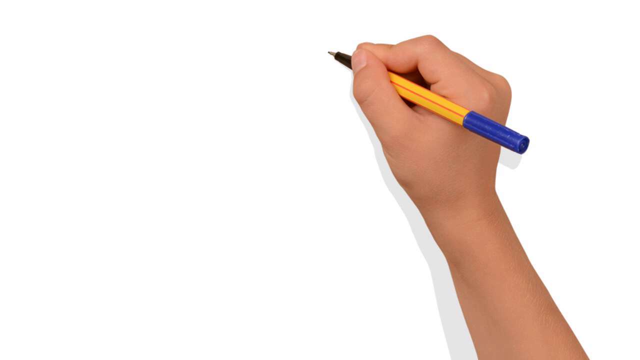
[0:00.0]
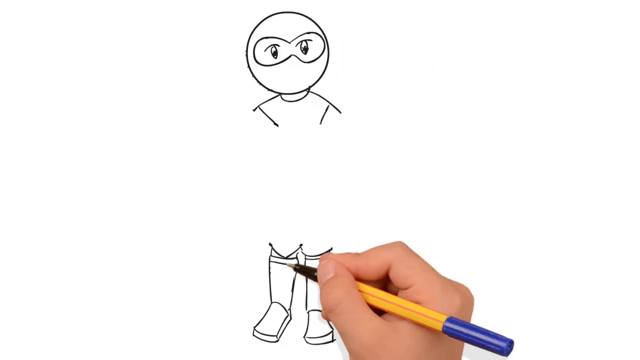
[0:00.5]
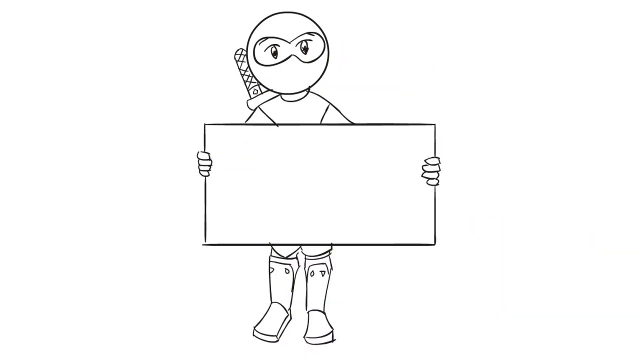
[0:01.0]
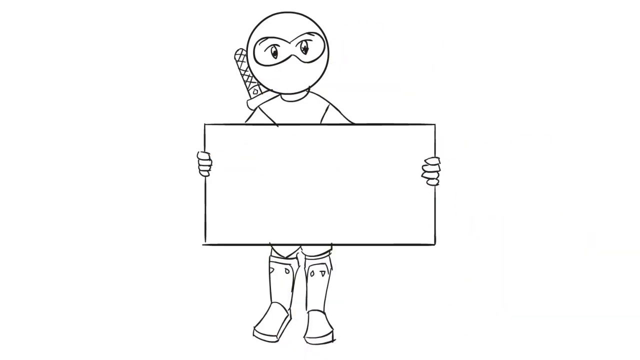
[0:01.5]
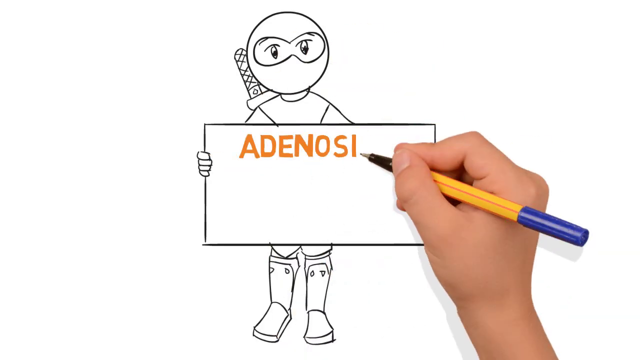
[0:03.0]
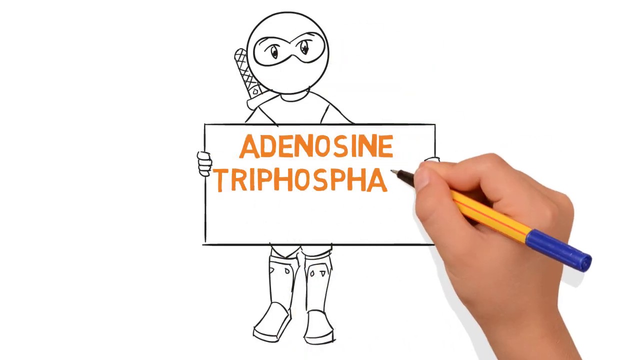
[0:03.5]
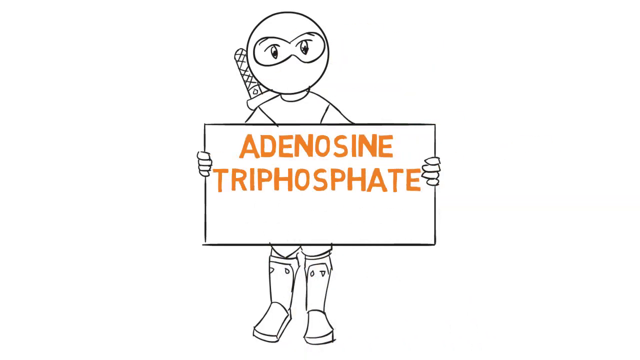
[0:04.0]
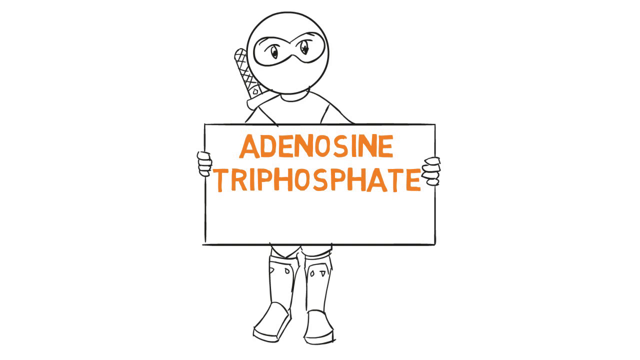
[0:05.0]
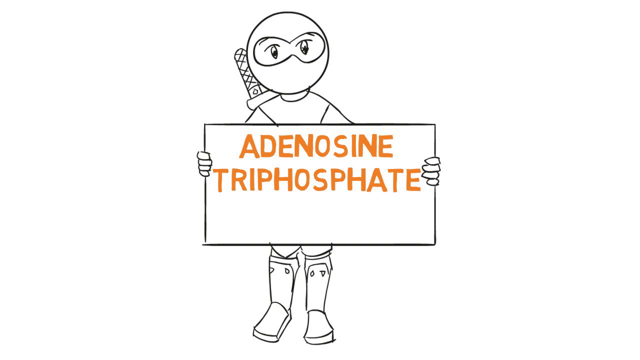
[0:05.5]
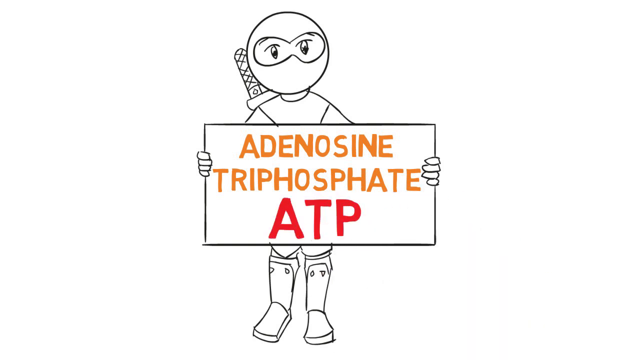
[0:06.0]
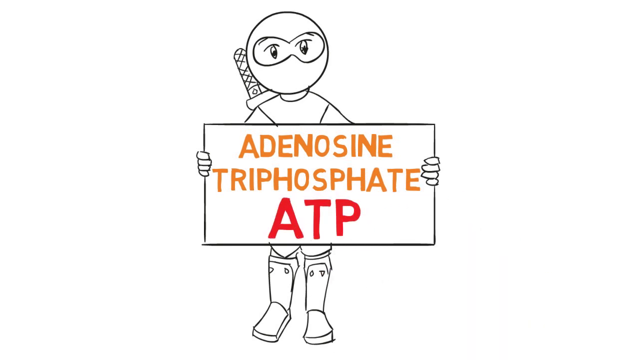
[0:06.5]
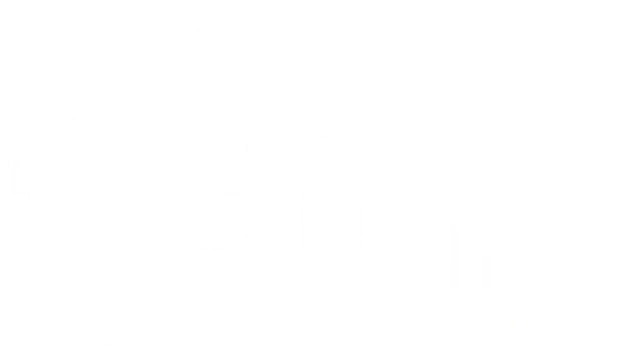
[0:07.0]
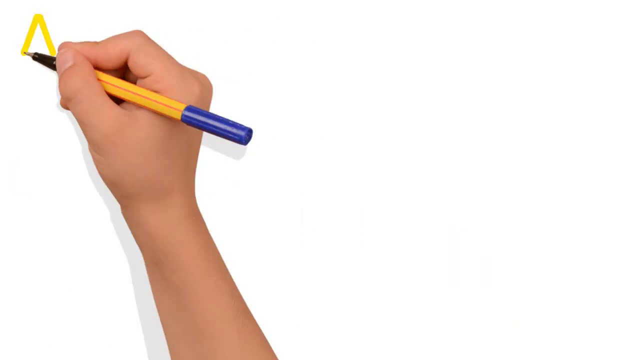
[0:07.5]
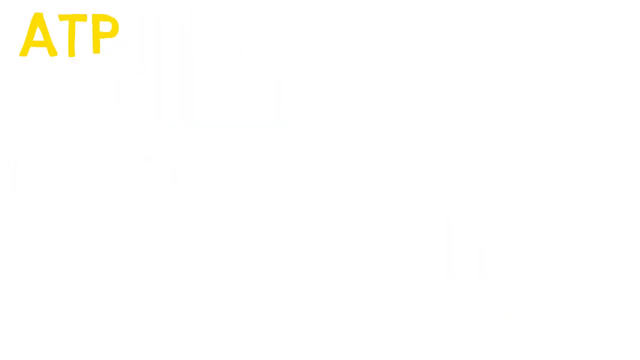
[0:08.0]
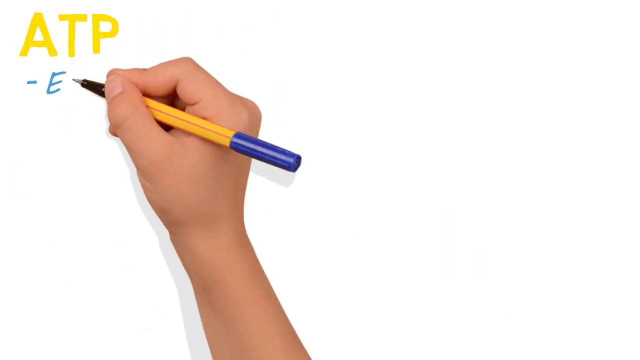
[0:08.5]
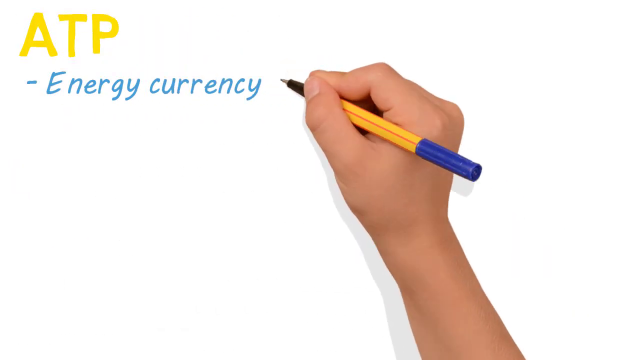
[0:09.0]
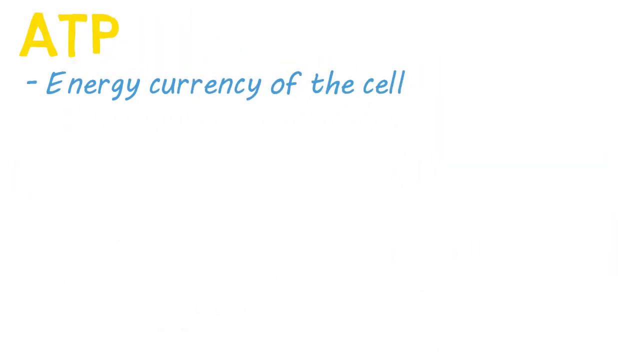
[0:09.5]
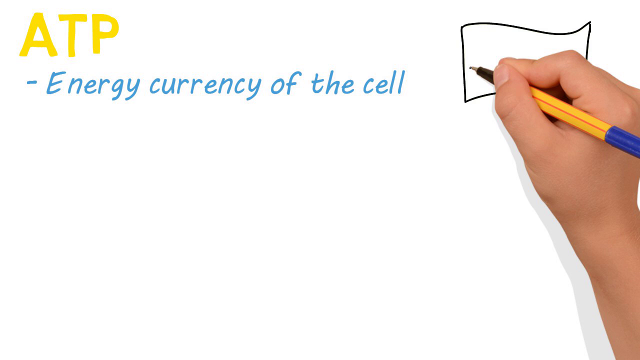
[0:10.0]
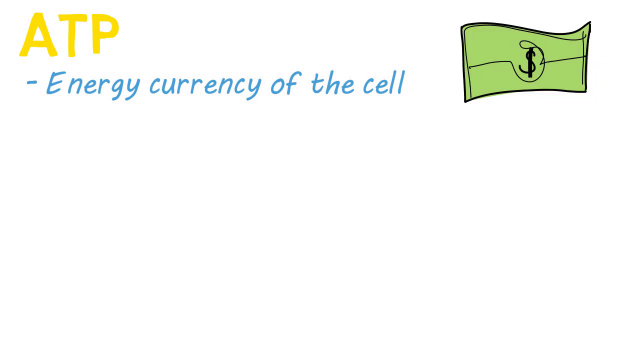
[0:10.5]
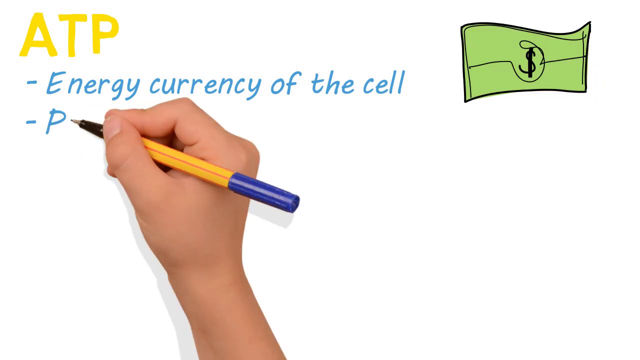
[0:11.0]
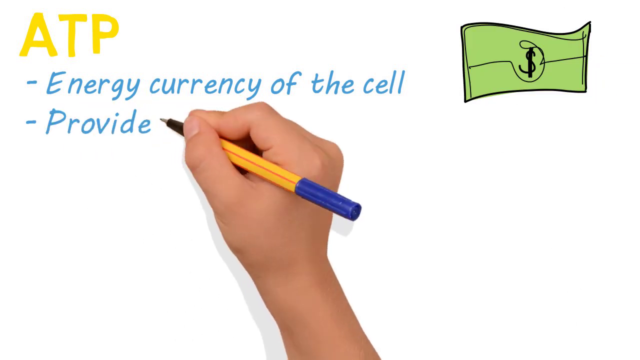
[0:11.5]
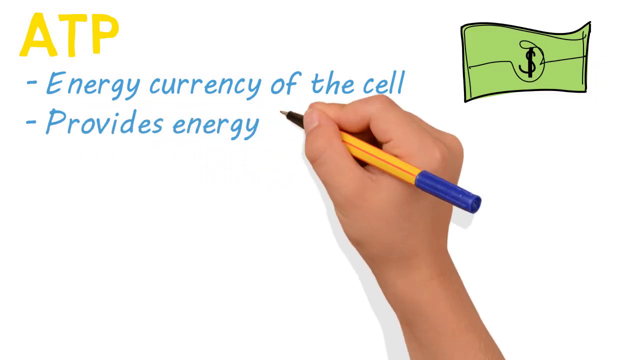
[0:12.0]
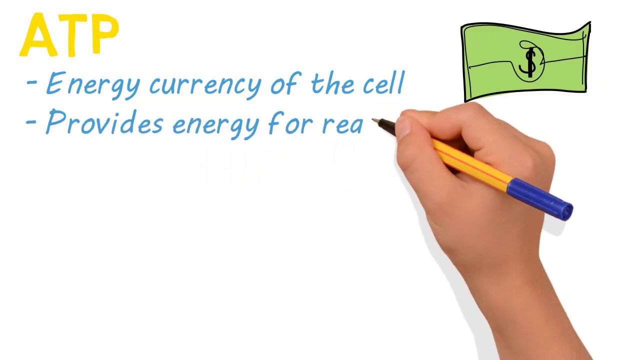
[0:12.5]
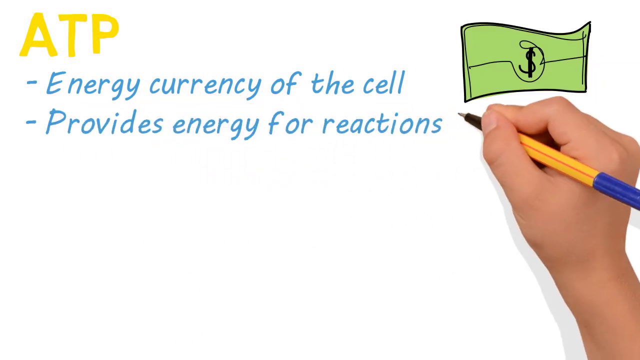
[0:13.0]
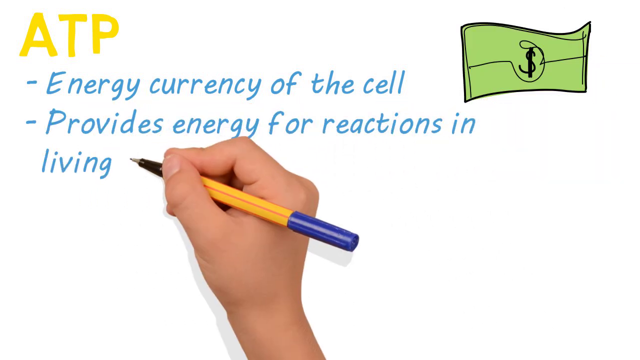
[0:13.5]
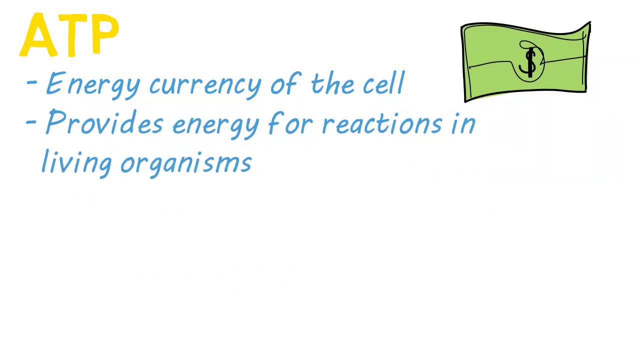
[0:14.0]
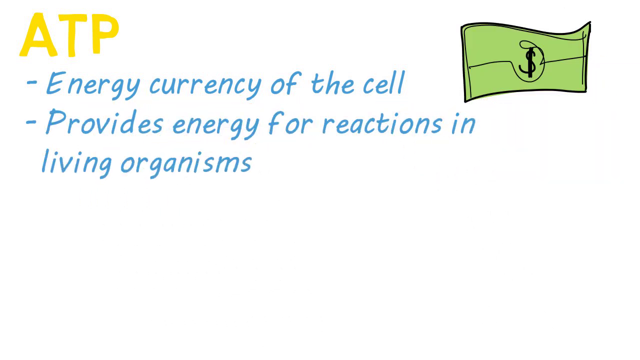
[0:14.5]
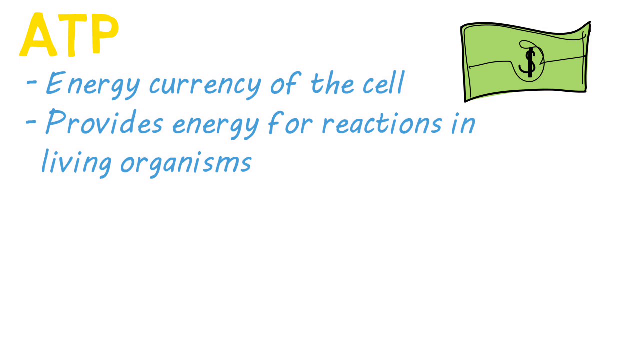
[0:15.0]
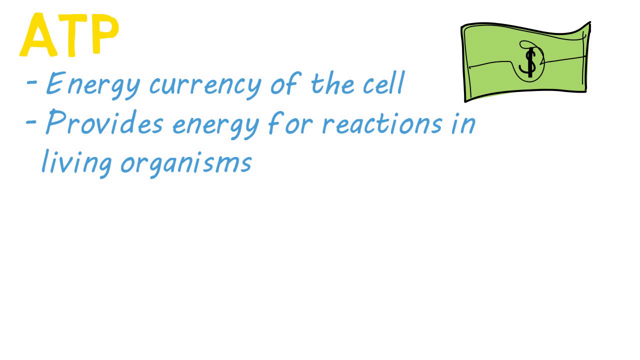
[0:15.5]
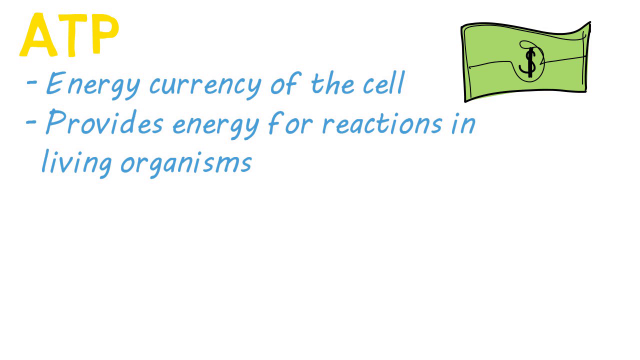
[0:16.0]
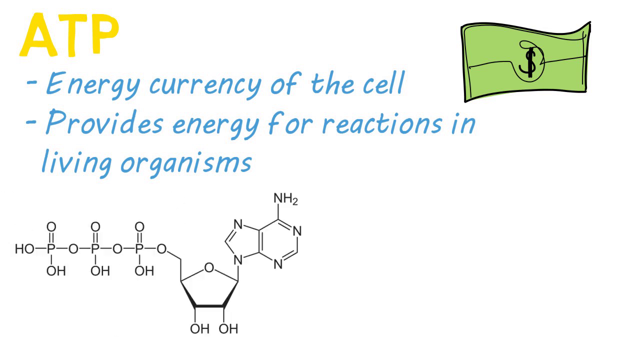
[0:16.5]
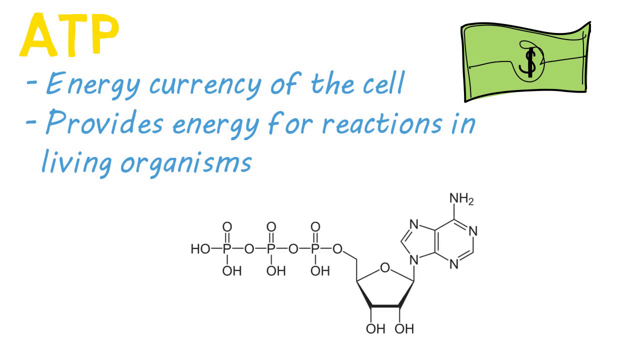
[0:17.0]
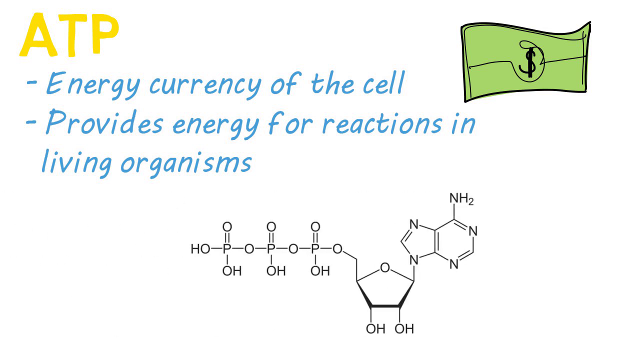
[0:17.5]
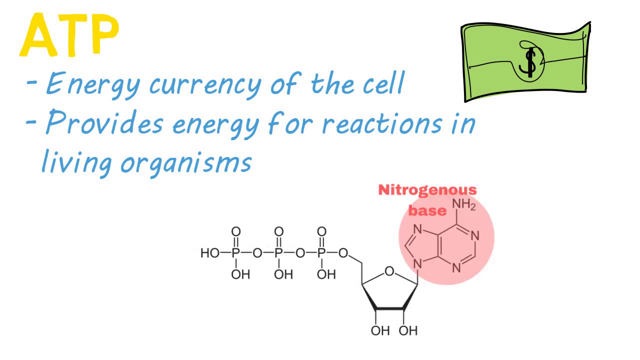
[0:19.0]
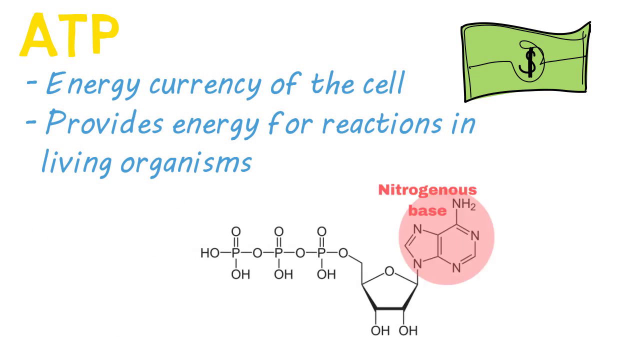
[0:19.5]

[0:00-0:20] A hand holding a pencil appears on screen. The pencil has a blue top, a yellow center, and a black area at the tip. Holding it in the right hand, the hand draws a black-and-white image that looks like a samurai. The same hand then writes words onto the banner the figure is holding: "adenosine triphosphate." Underneath that it writes "ATP," apparently the abbreviation for the term on the banner. The hand then moves across the screen from left to right, writing more words. At the top the text reads "ATP," "energy currency of the cell," and "provides energy for reactions in living organisms." In the top right corner there is a green note that looks like a dollar bill.